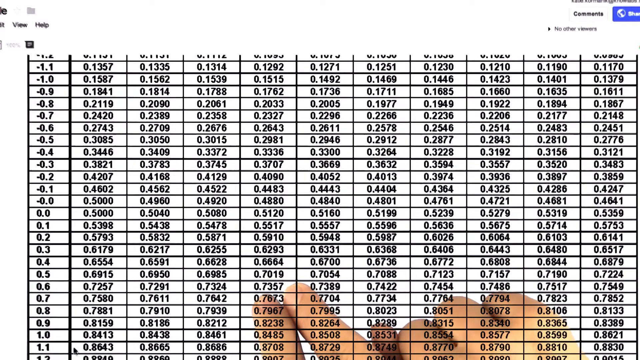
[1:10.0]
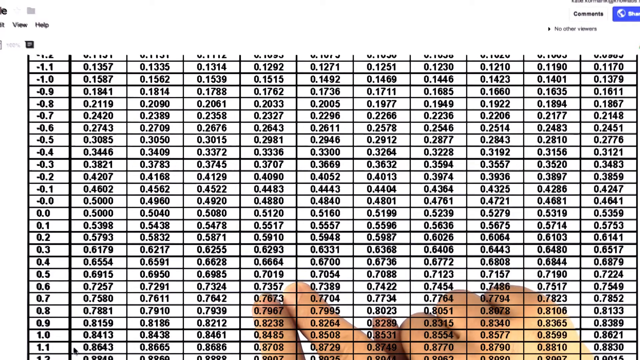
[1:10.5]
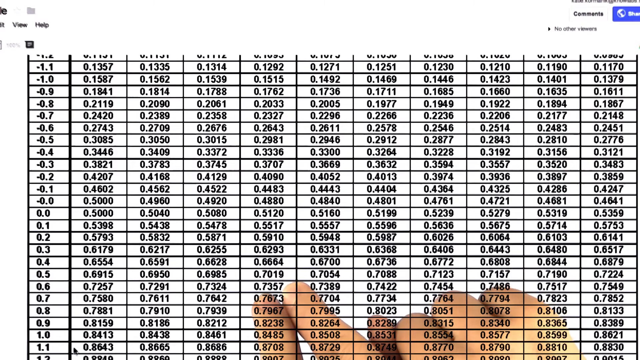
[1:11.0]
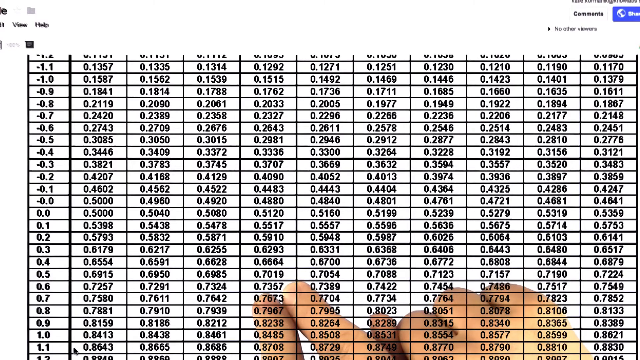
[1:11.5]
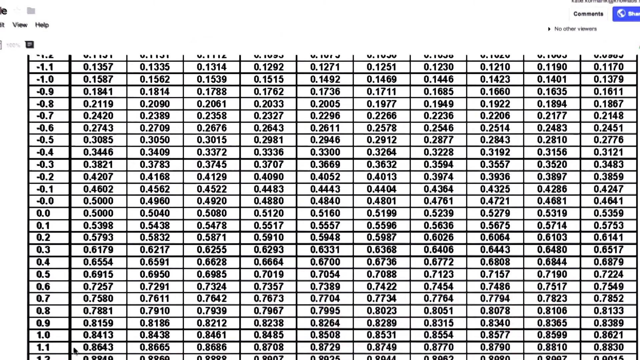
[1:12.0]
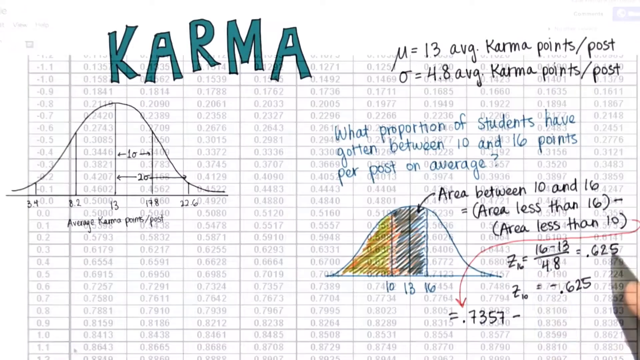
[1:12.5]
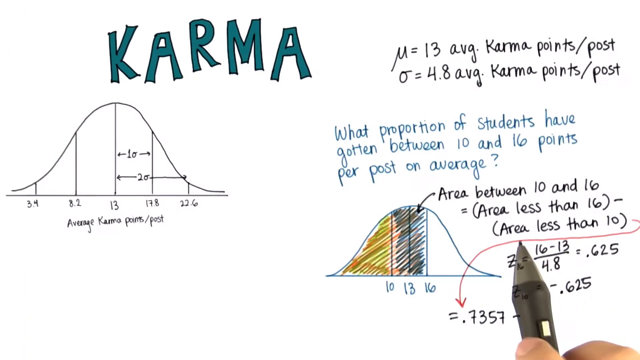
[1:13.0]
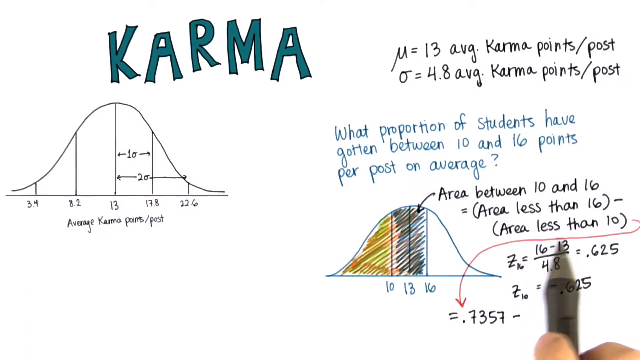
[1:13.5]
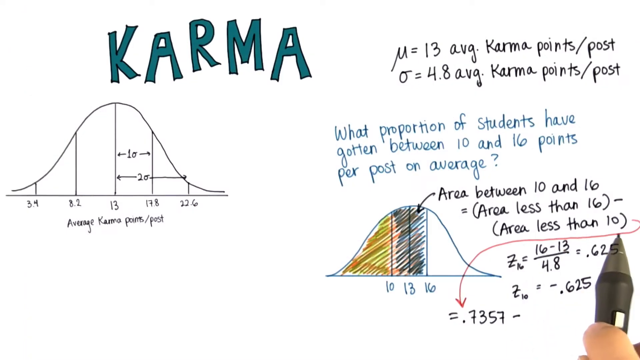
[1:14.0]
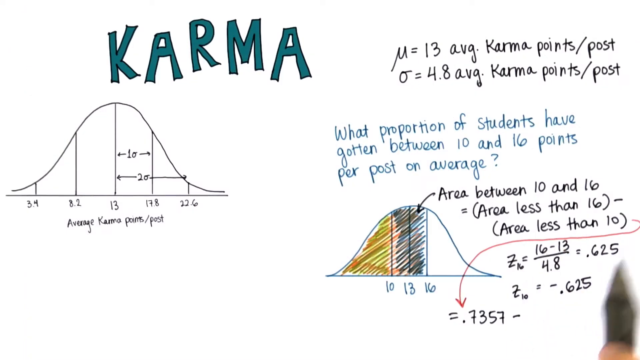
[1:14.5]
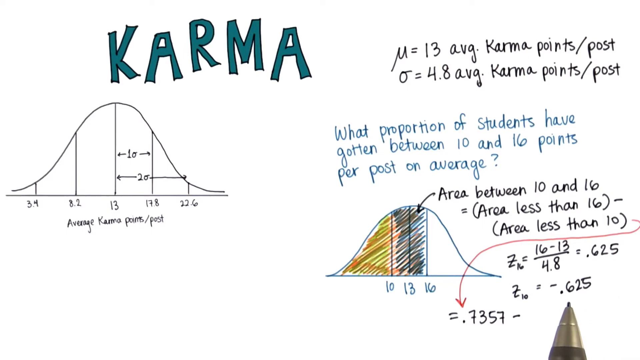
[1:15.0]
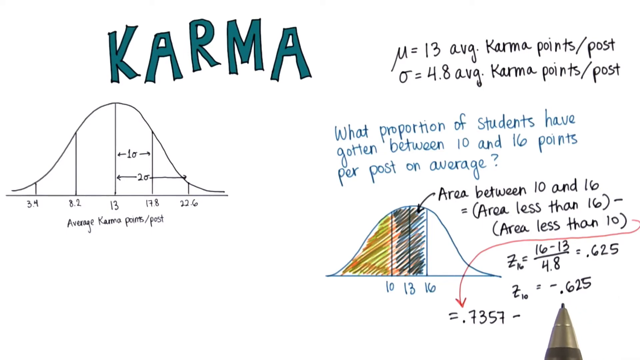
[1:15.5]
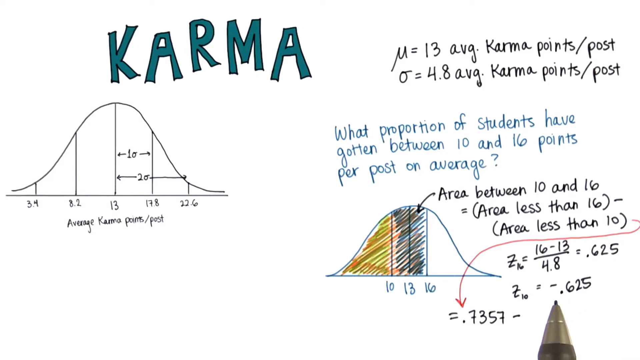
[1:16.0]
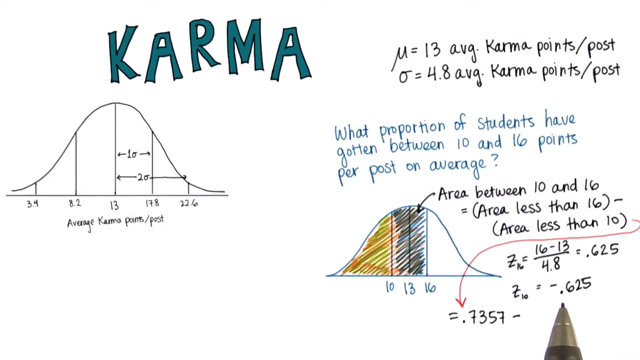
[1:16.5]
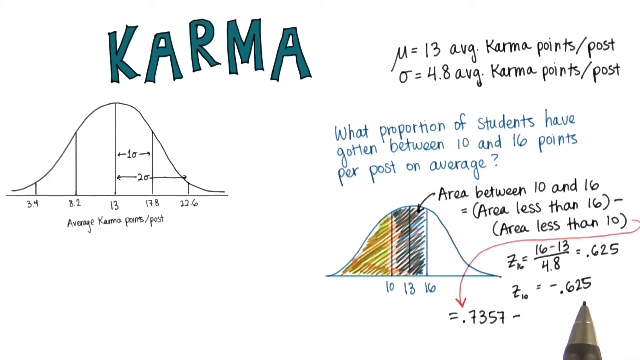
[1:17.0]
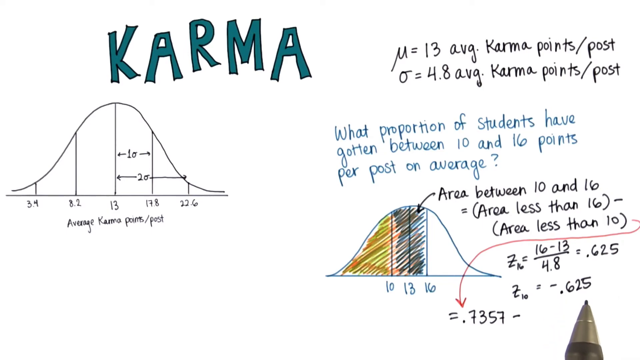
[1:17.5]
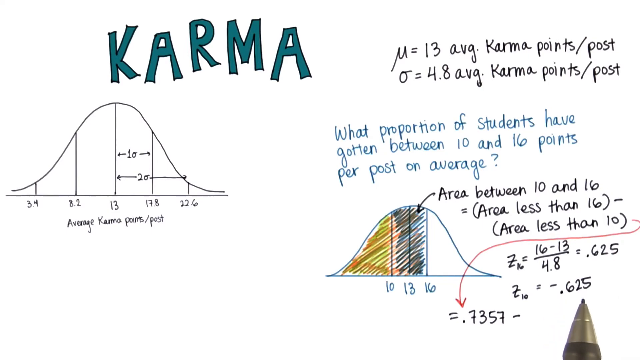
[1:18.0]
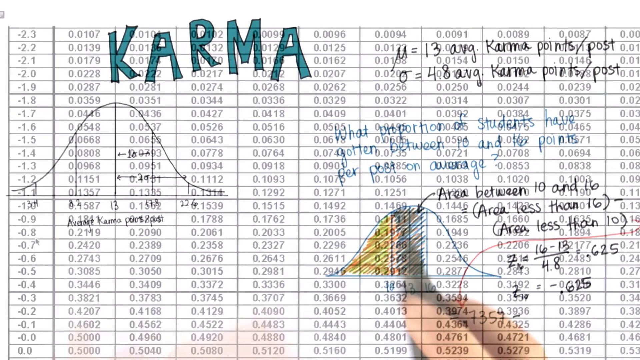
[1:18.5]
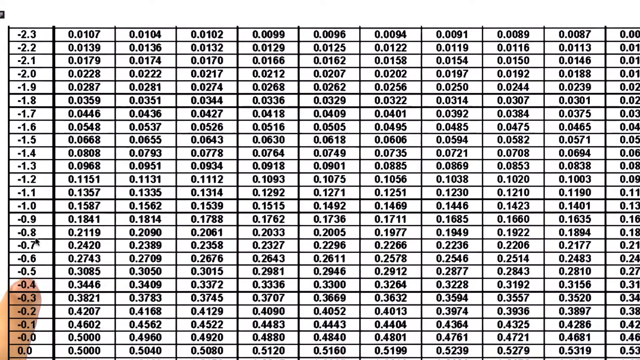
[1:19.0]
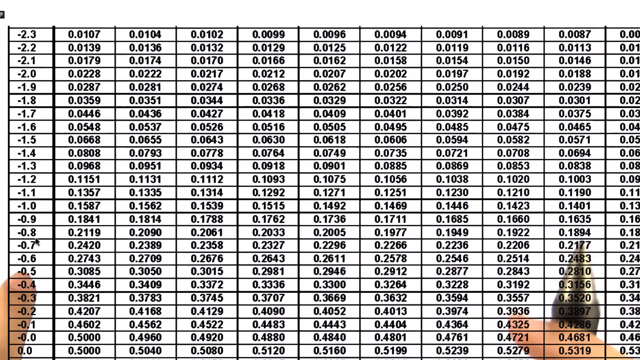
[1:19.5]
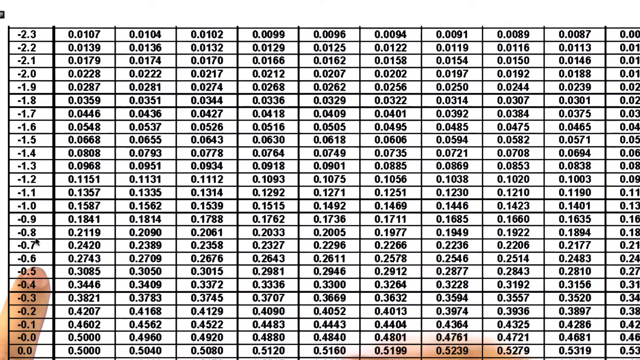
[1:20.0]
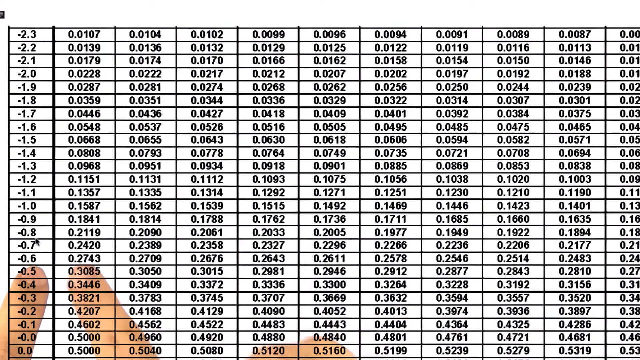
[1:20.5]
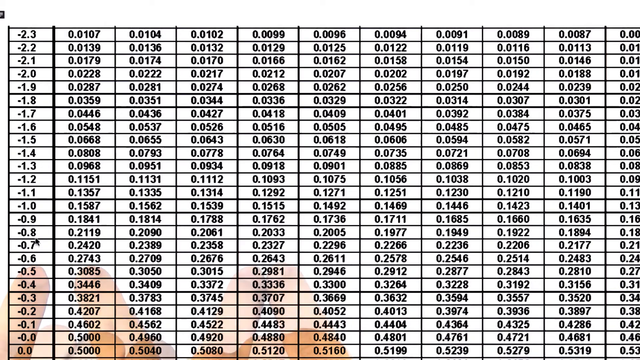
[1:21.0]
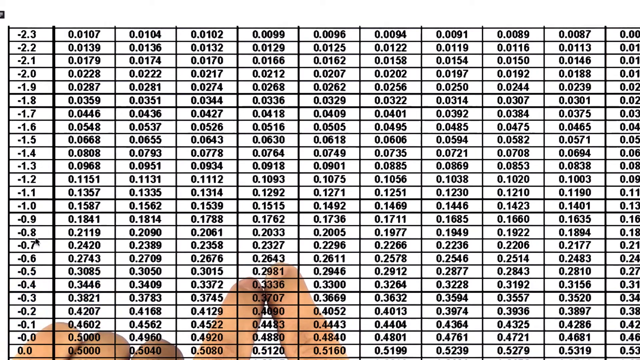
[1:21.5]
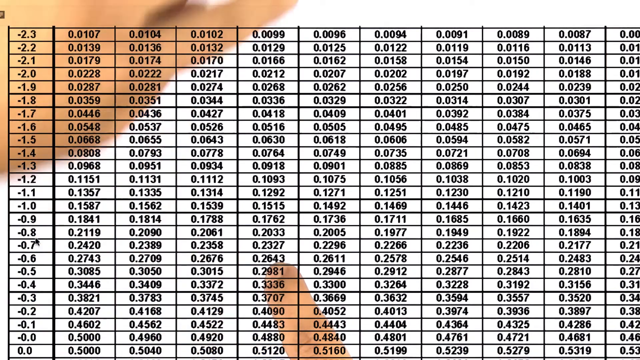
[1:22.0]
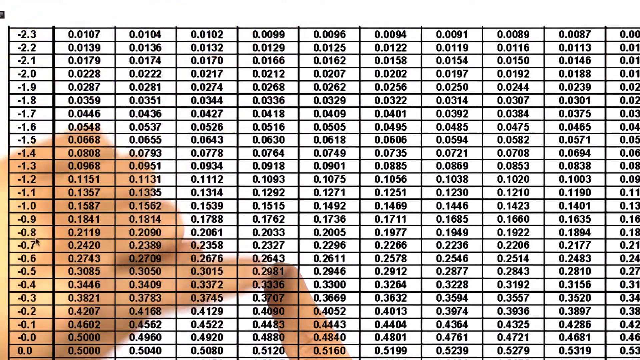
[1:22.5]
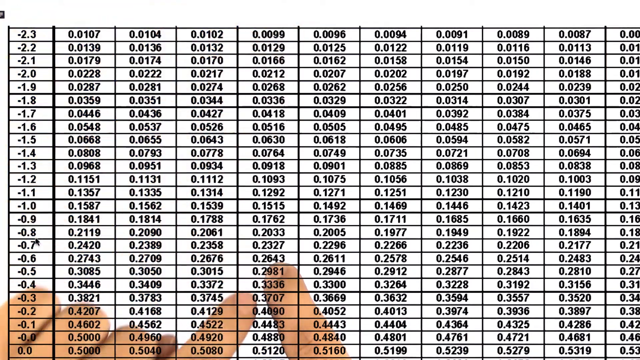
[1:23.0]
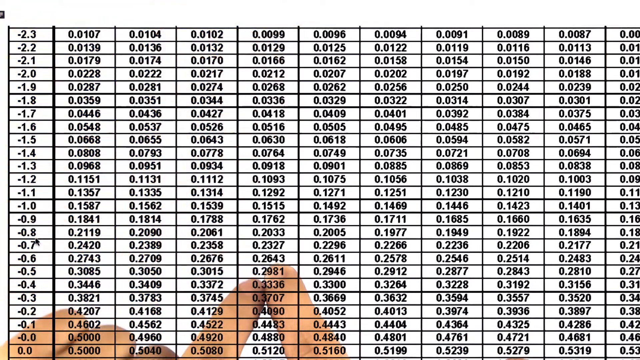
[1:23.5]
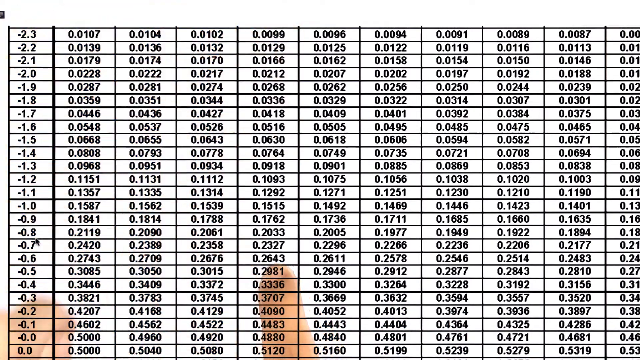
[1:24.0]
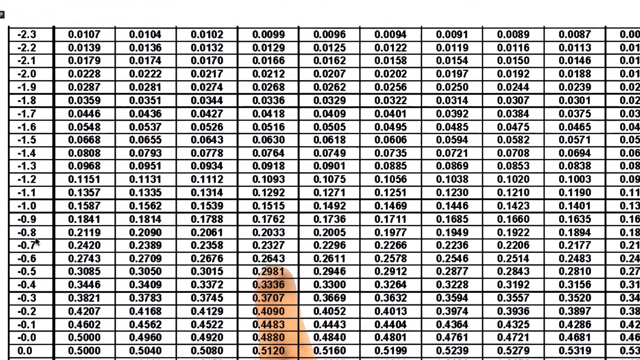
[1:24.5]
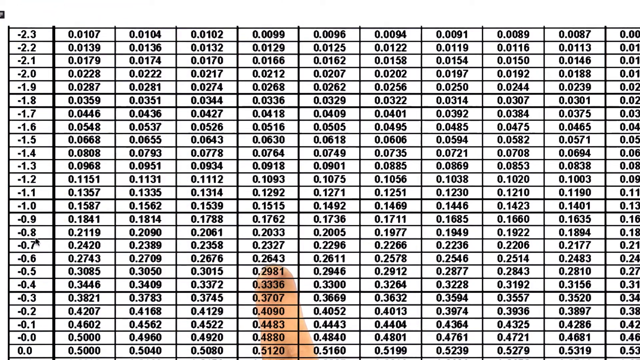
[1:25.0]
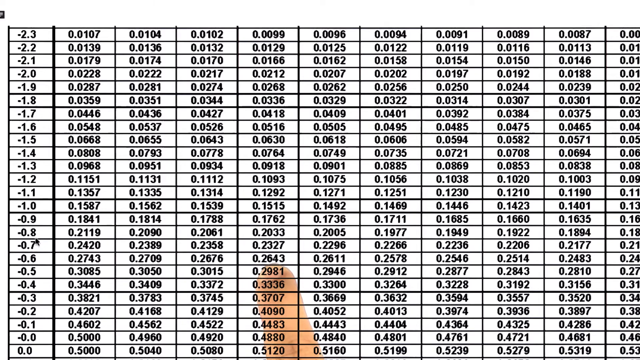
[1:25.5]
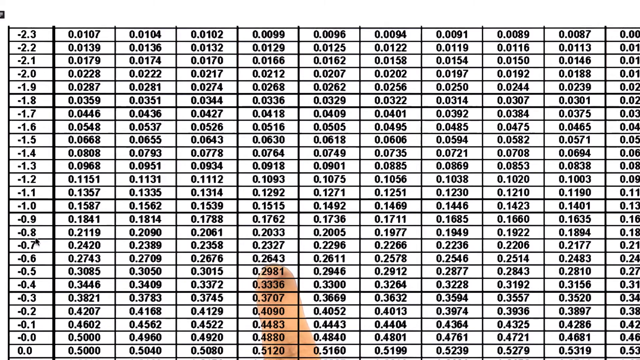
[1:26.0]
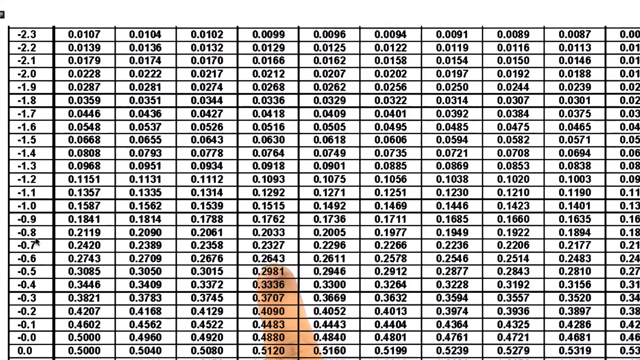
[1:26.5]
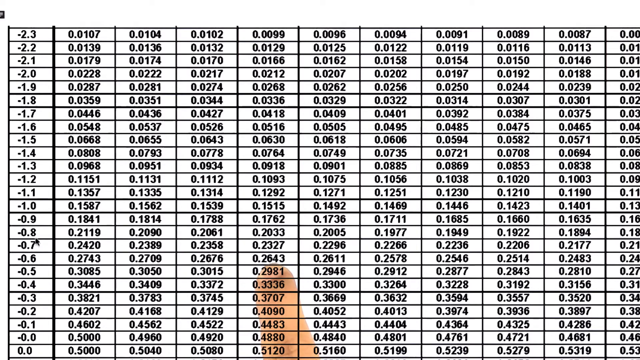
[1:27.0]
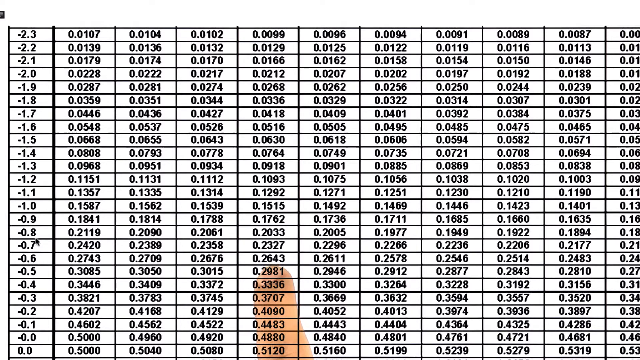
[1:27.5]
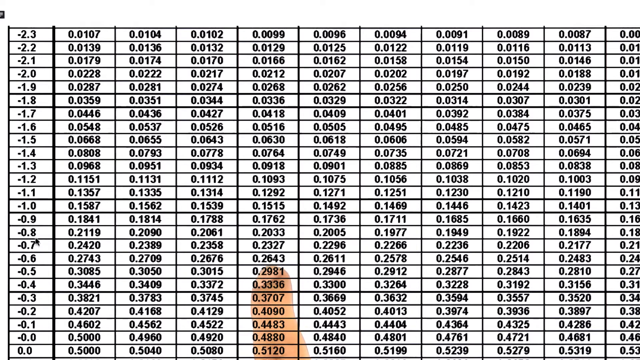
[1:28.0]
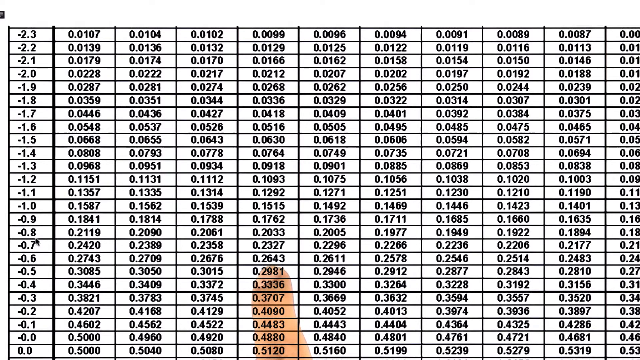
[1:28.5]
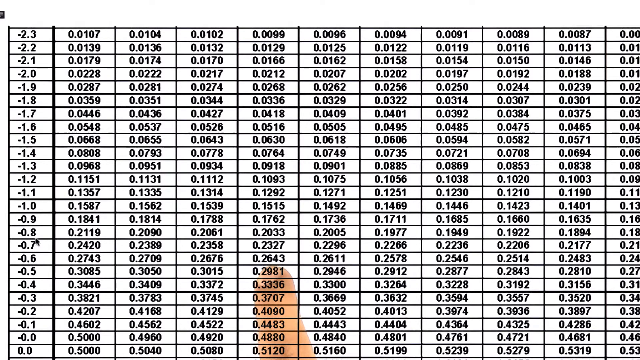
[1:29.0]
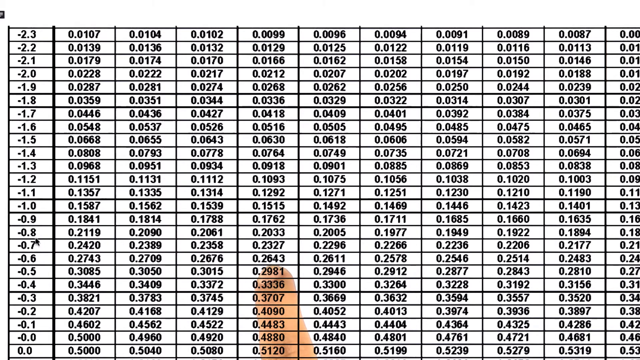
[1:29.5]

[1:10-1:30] A projection of a chart is on a white background, with two hands visible. The left hand has come across the row from the left at 0.6, and the right hand has come down the fourth column; they converge at 0.7357, where the narrator holds both fingers pointing. The screen changes, and he shows where this number is inserted into his chart below the diagram. He then moves to another number, 0.06, and comes down the fourth column again to 0.2643.